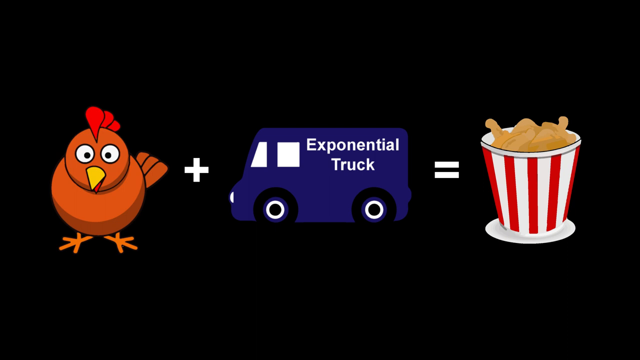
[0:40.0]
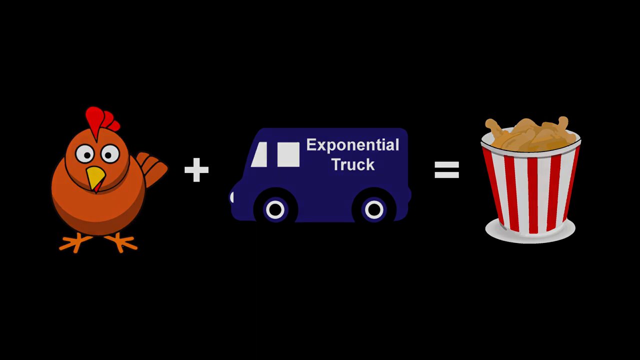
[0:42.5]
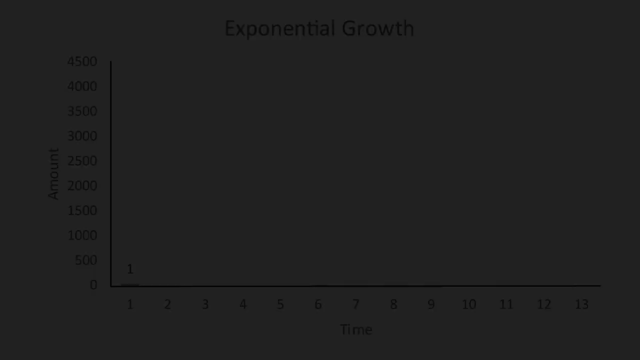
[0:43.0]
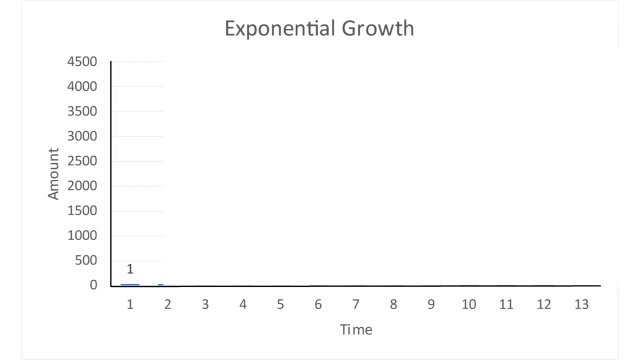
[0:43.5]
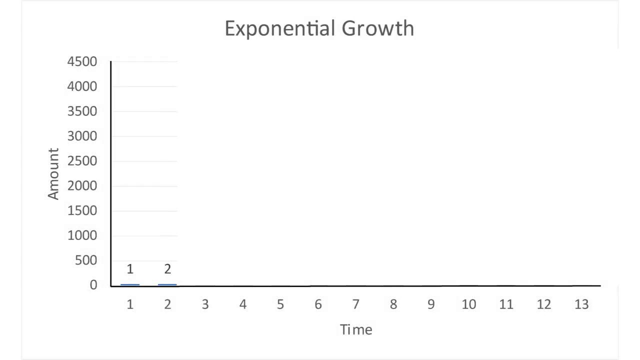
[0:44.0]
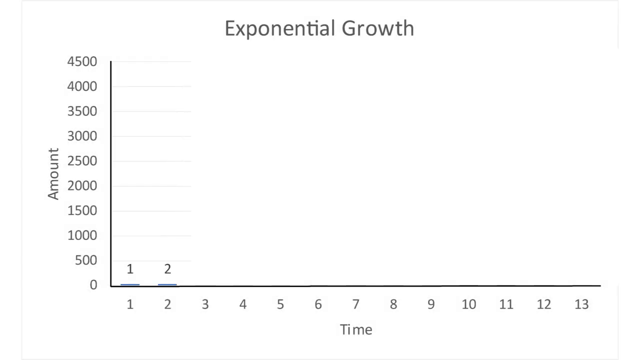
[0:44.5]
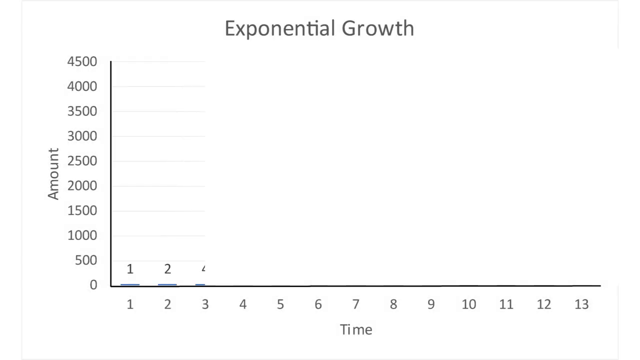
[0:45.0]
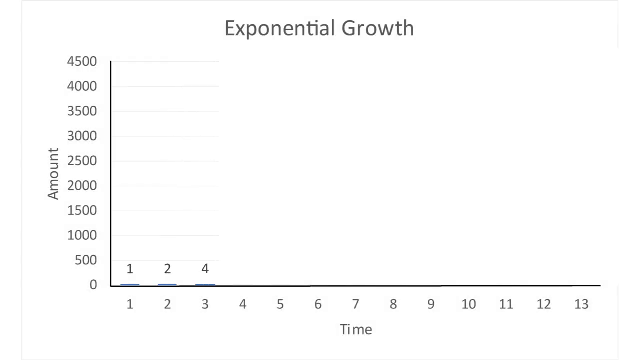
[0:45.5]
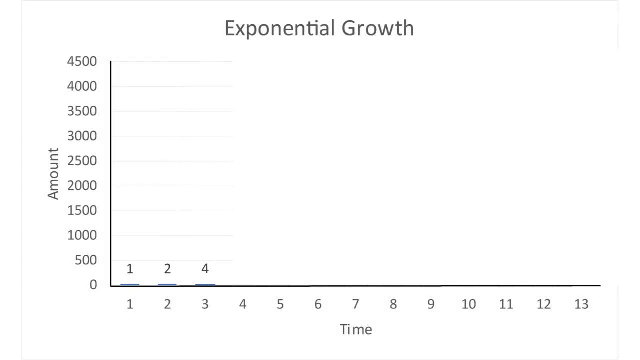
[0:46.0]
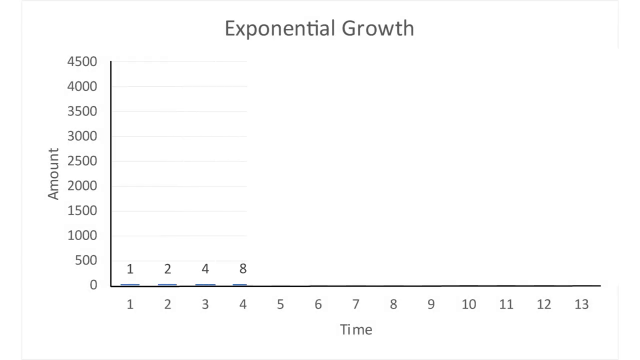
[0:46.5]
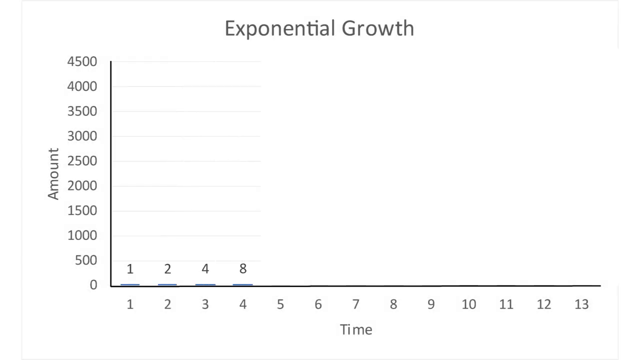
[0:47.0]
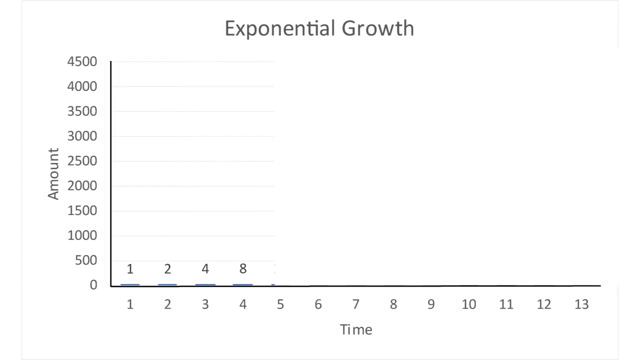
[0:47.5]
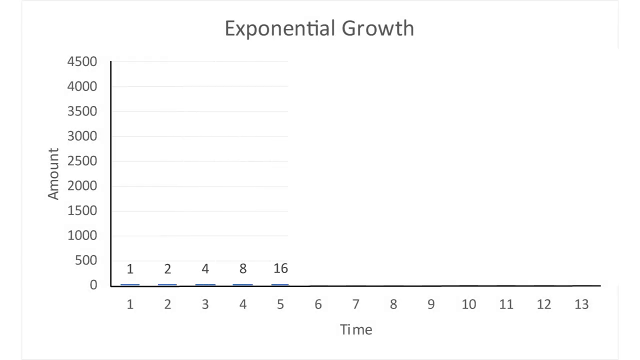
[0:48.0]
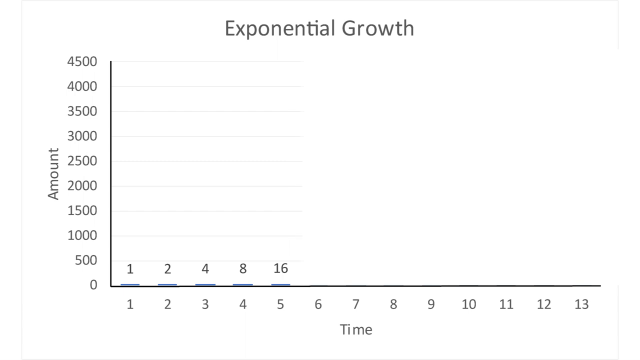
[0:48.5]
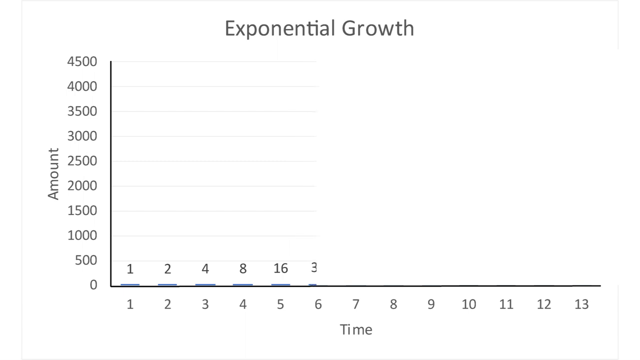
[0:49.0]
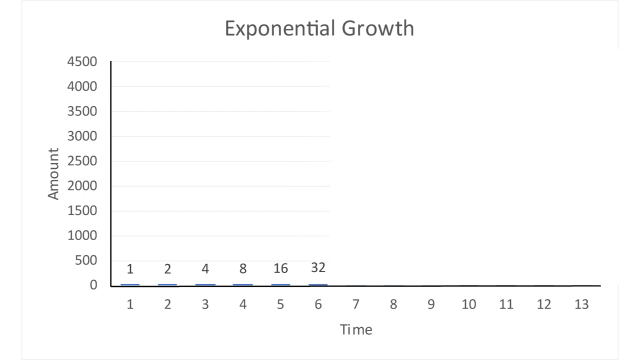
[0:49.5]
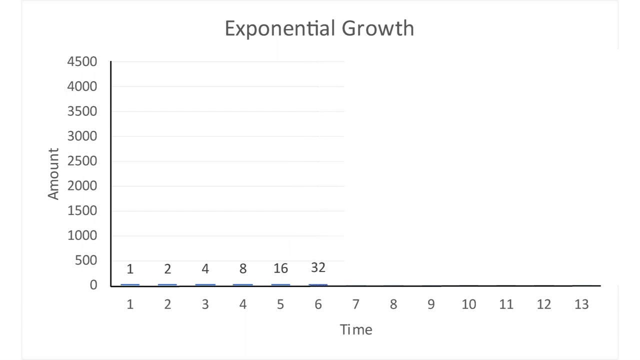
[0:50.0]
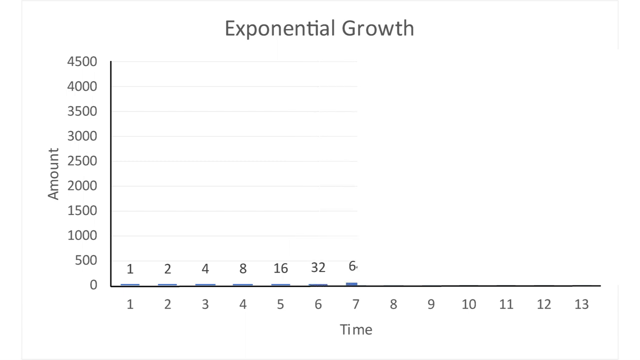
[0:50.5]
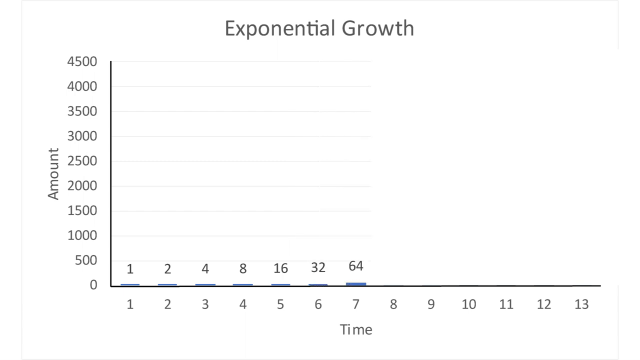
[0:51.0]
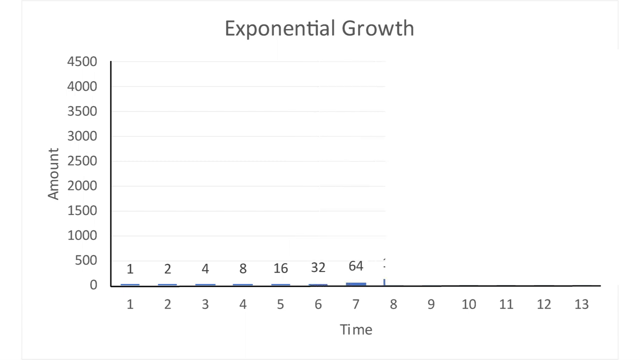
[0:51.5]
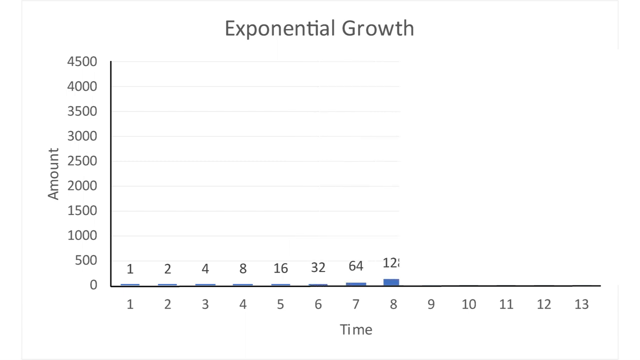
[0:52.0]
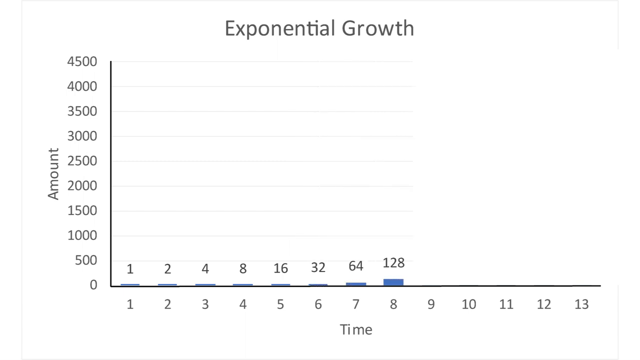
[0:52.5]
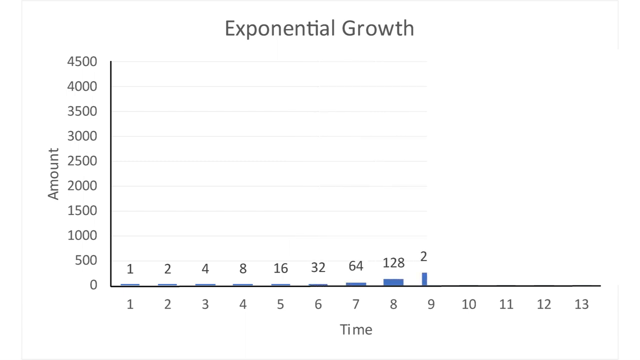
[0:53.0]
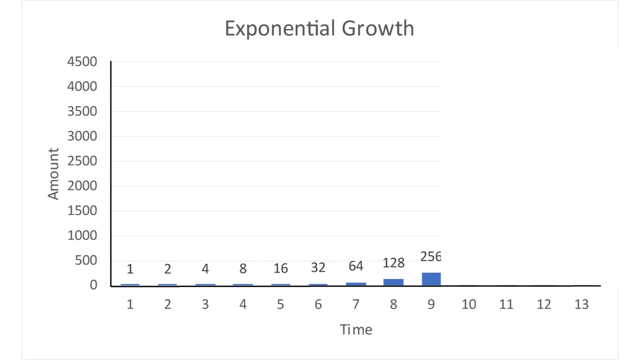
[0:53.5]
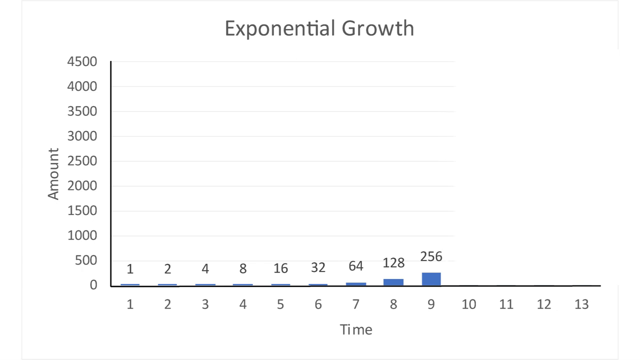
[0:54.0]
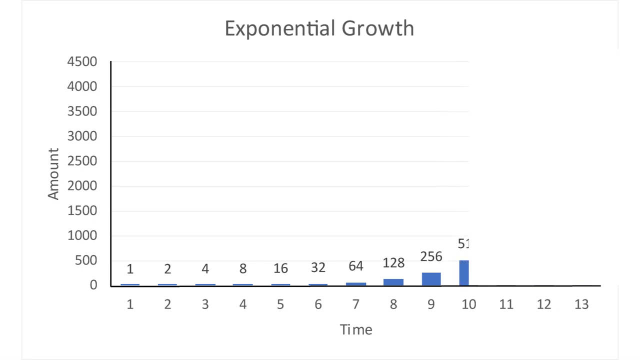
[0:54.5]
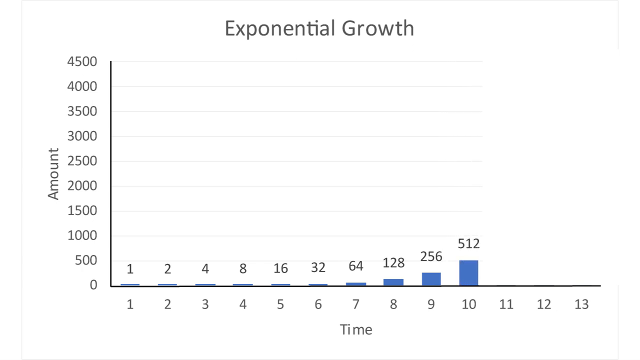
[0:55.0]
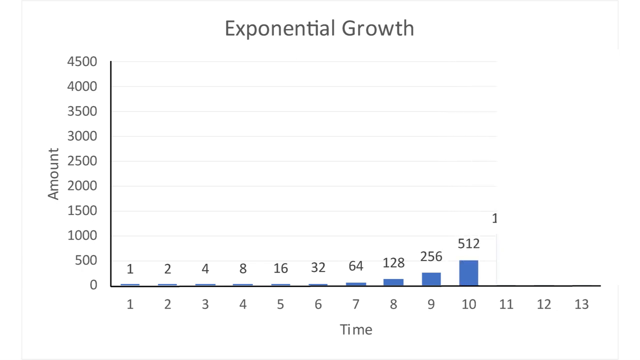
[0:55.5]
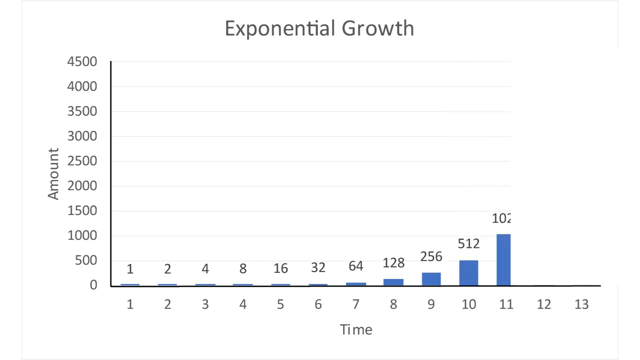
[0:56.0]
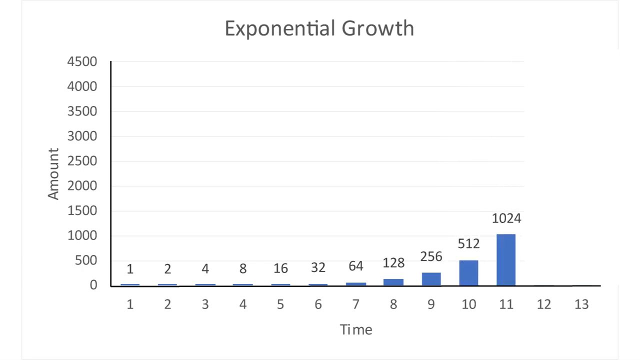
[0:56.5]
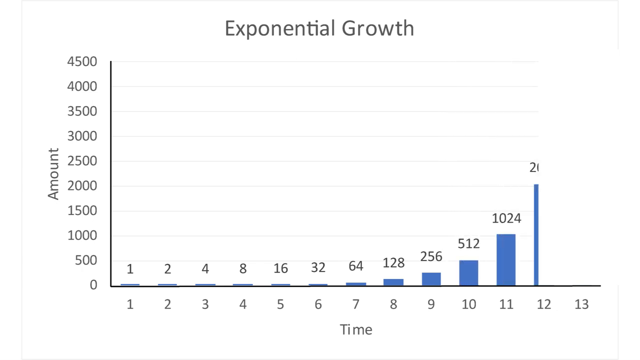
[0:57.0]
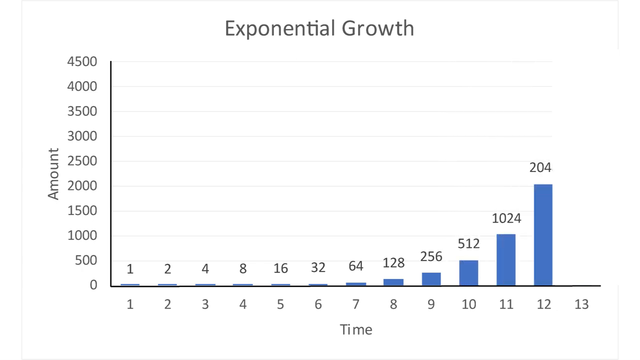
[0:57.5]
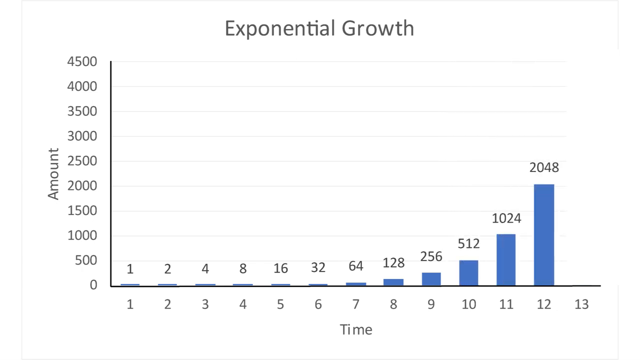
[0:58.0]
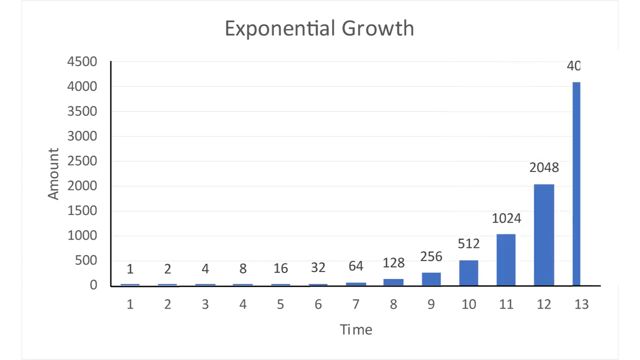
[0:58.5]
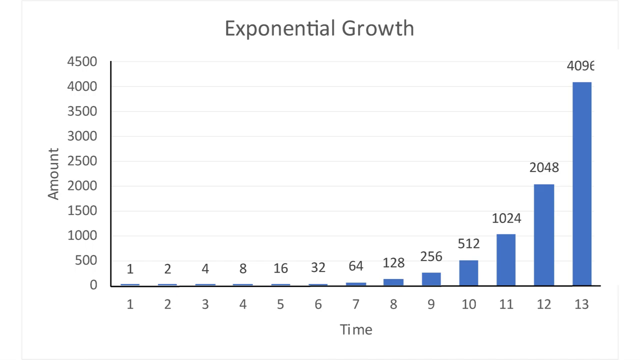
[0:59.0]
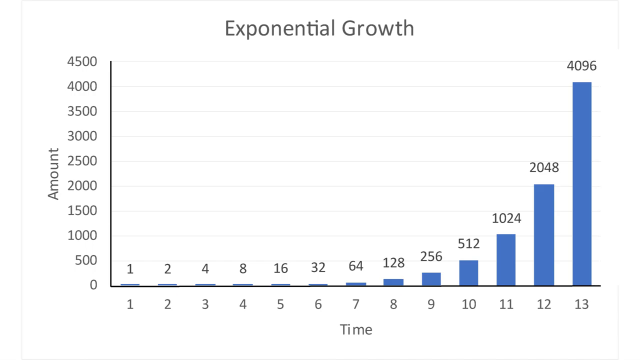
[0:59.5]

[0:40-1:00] A graph with a white background appears, with "exponential growth" written at the top. Numbers from 0 to 4400 run up the left side, and numbers from 1 to 13 run from left to right along the bottom. Numbers are written at the top of the graph, and as they rise, blue bars go up. At each step from 1 to 13 the number is multiplied by 8, so the value and the blue bar keep rising; at 13 the number is 4,096 and the bar is high.